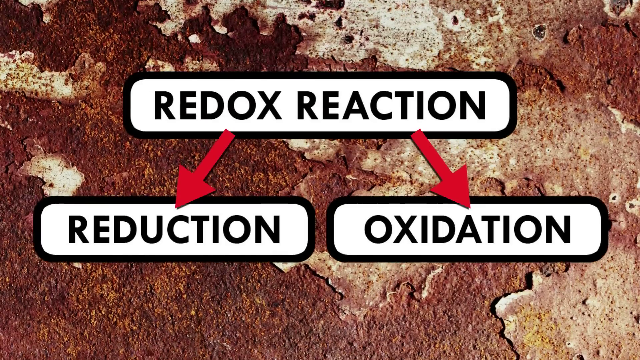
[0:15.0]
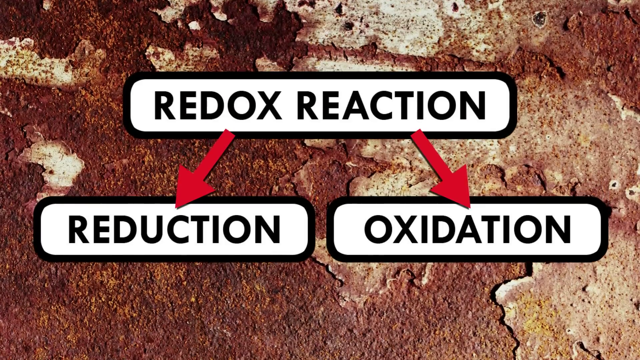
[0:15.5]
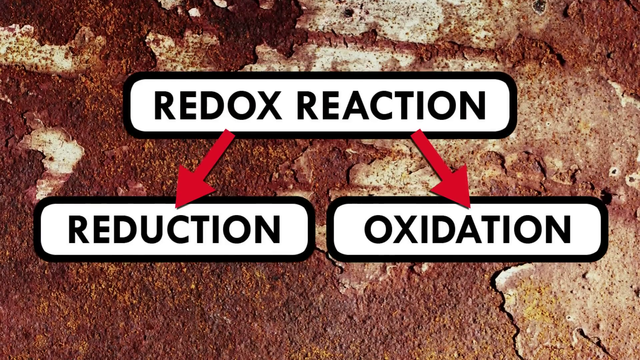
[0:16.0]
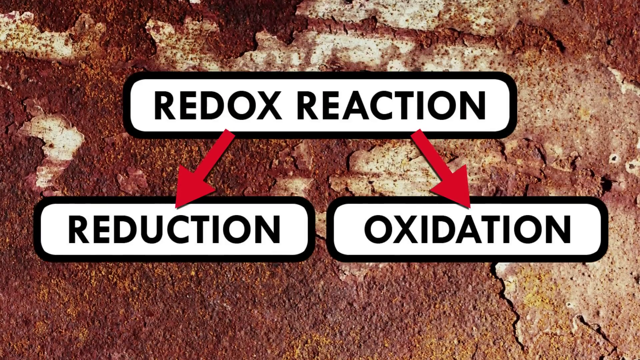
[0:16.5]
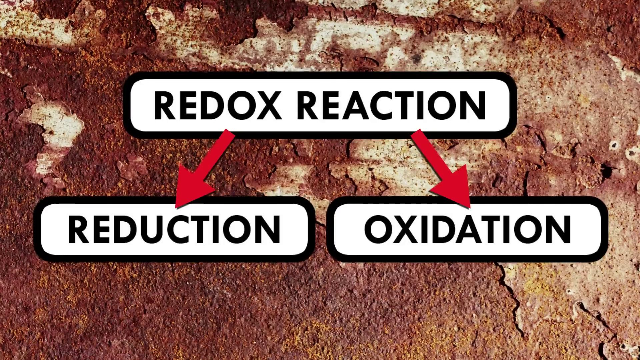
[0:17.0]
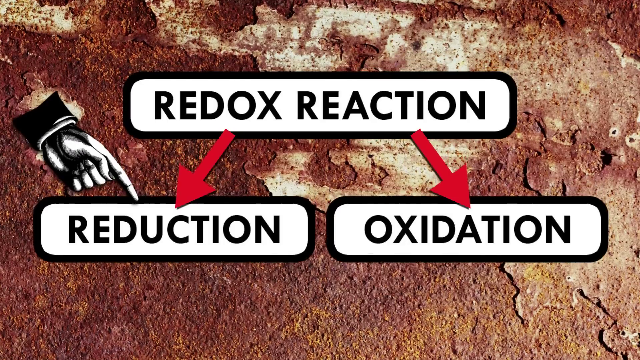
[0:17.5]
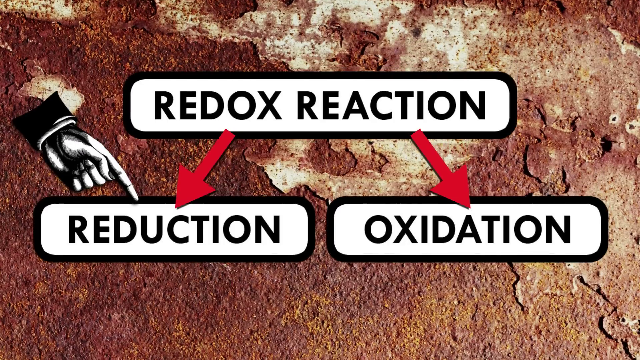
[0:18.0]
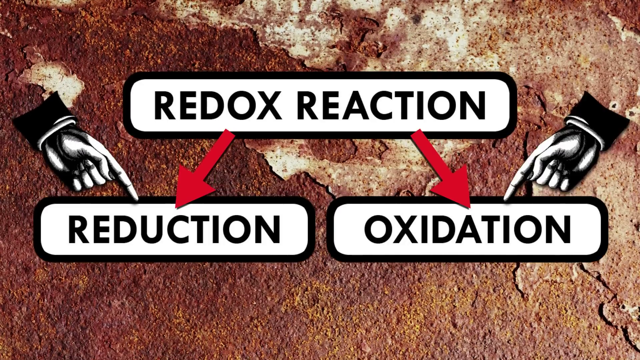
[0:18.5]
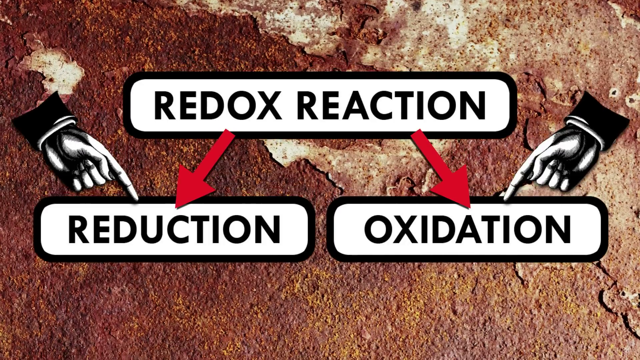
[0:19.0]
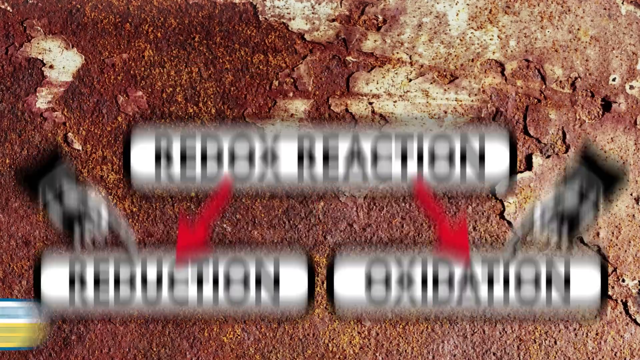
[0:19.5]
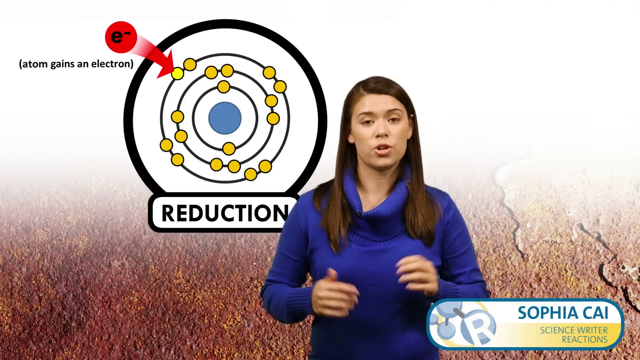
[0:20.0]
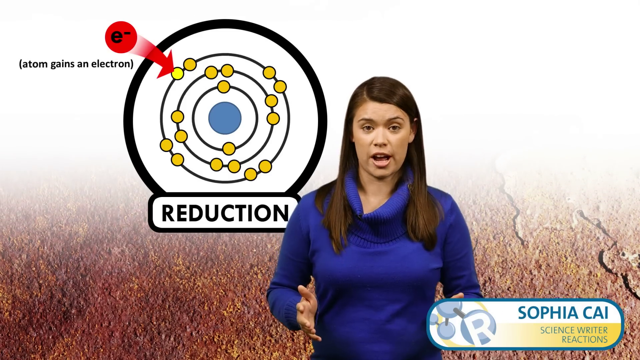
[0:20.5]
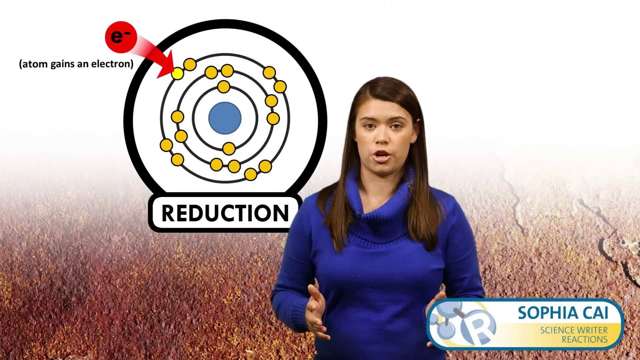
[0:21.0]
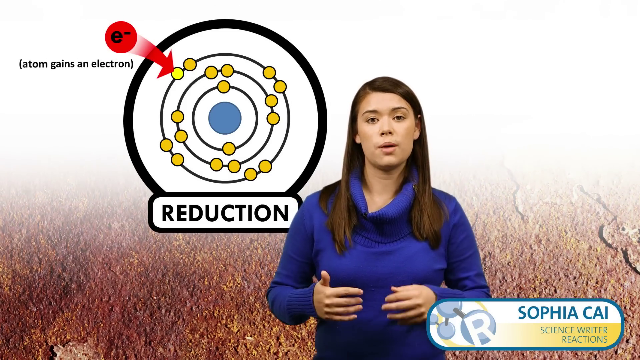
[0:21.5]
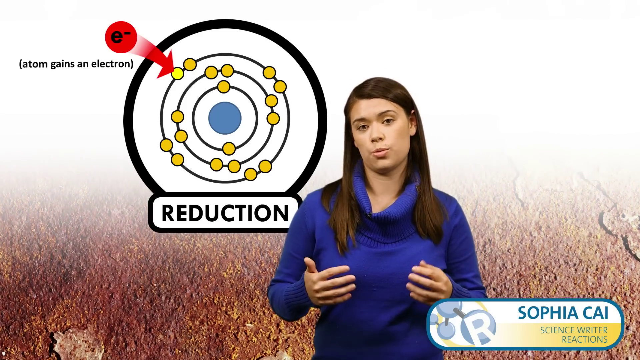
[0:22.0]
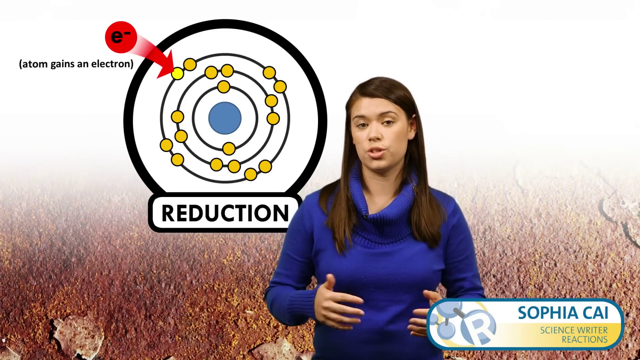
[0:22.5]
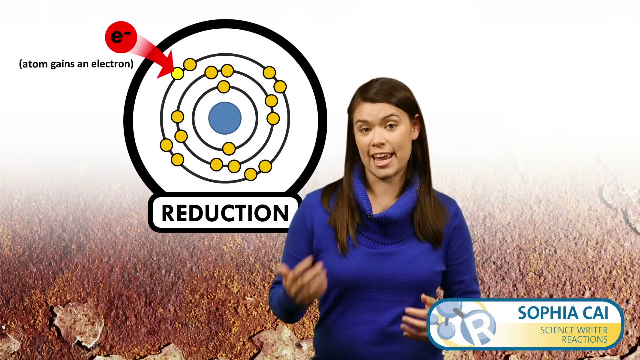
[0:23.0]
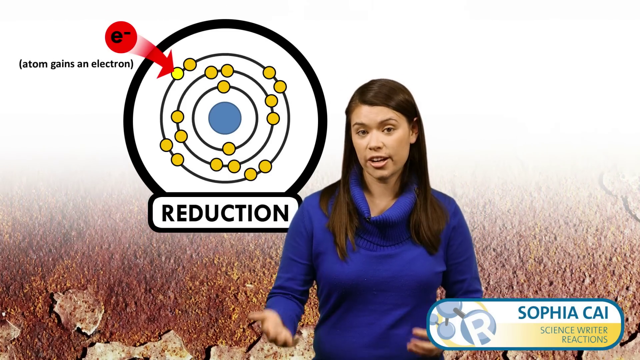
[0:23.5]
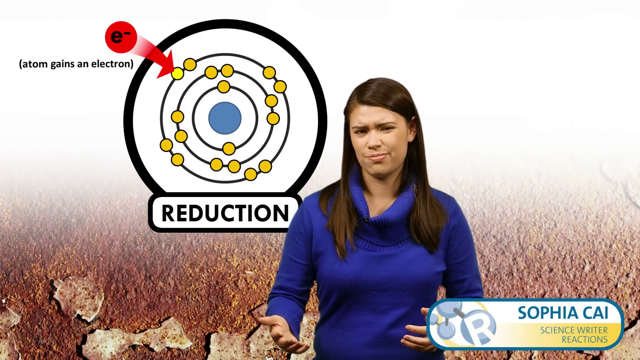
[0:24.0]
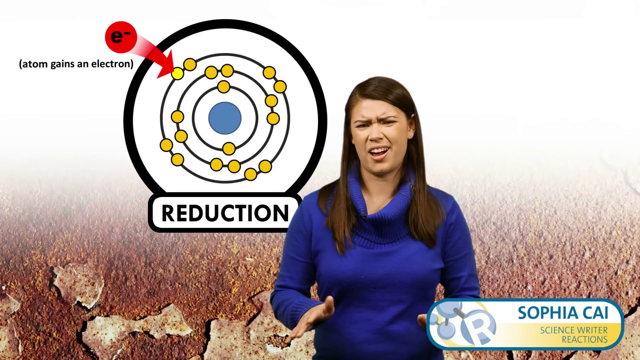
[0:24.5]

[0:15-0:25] The words "redox reaction", "reduction" and "oxidation" appear, with a comical hand that comes in and points to each one, and arrows pointing to them. A woman with long brown hair in a purple turtleneck talks to the camera and gestures with her hands. Behind her is a big bullseye that is black with a bunch of black circles; there are yellow dots on the black circles, a big red arrow points to one of the yellow dots, and there is a big blue dot in the middle of the bullseye. There is a metal background. She is identified as Sophia, a science writer.